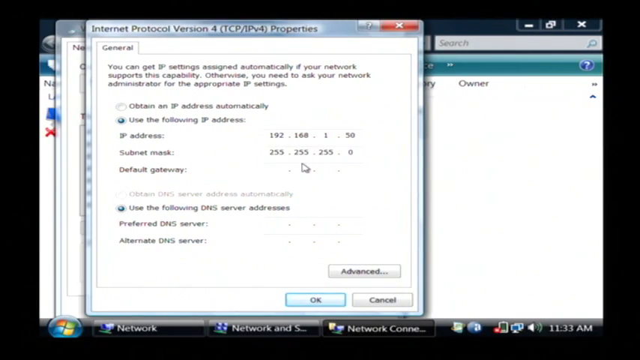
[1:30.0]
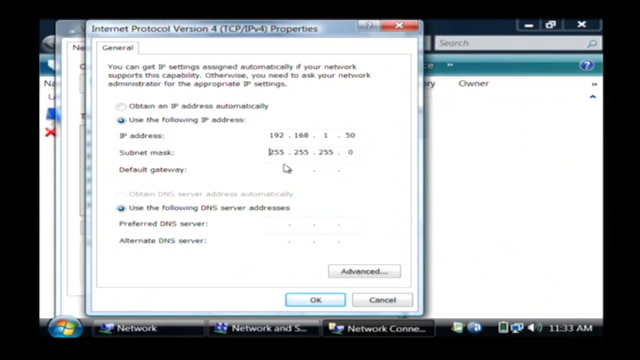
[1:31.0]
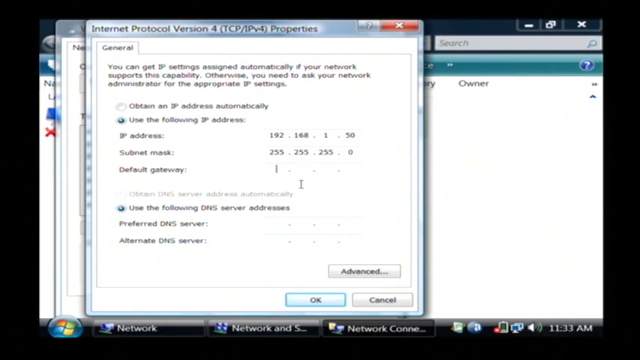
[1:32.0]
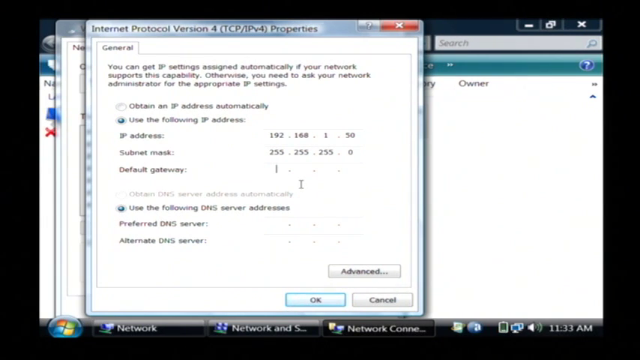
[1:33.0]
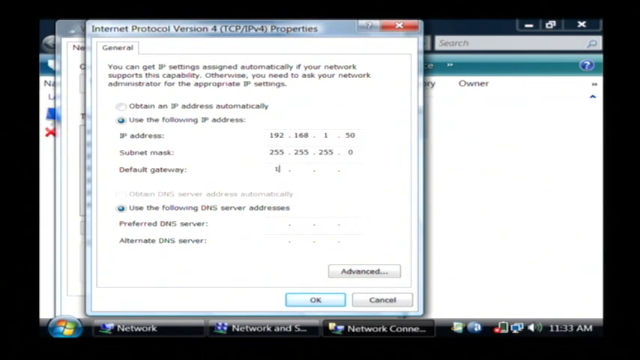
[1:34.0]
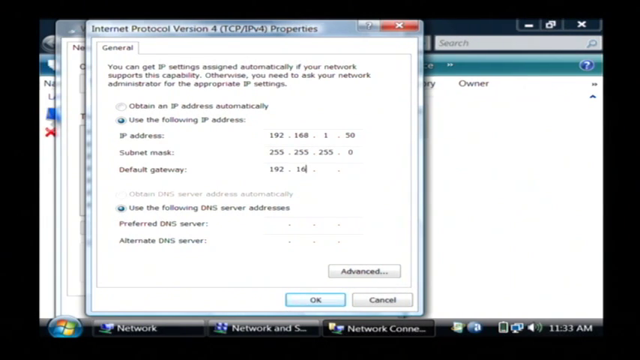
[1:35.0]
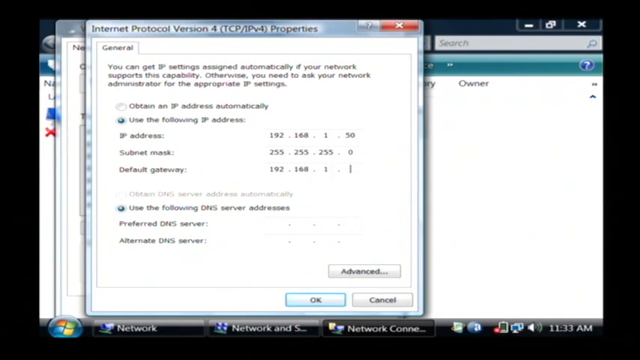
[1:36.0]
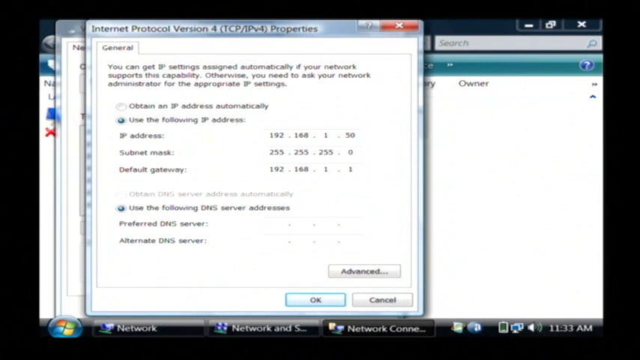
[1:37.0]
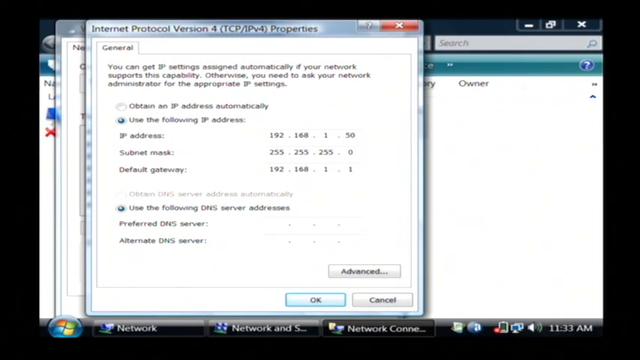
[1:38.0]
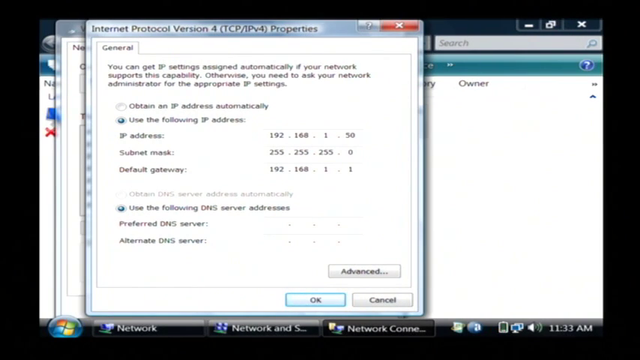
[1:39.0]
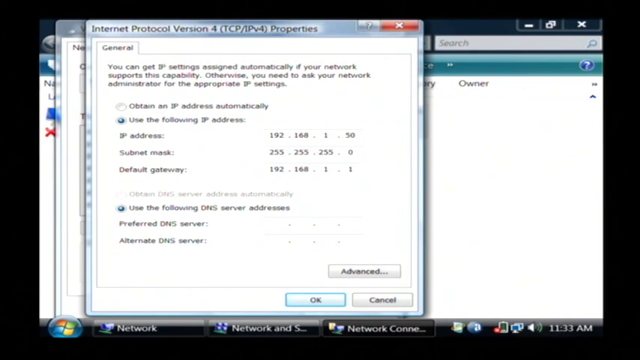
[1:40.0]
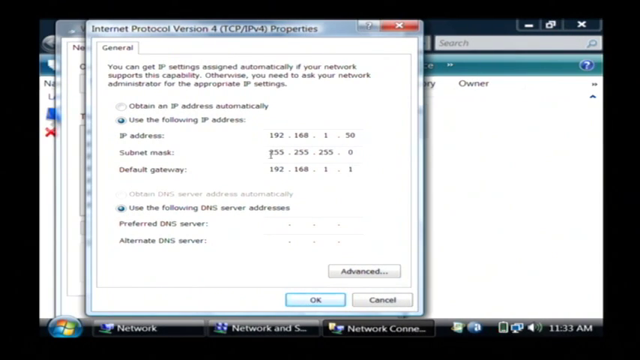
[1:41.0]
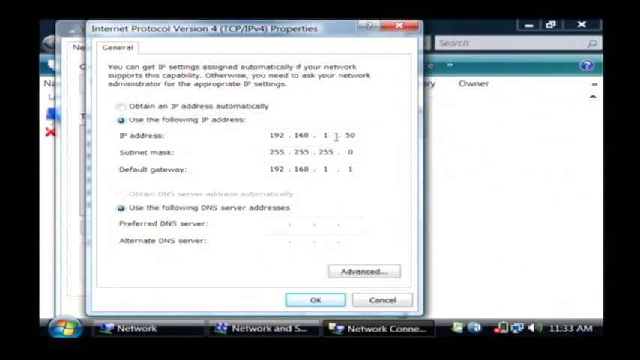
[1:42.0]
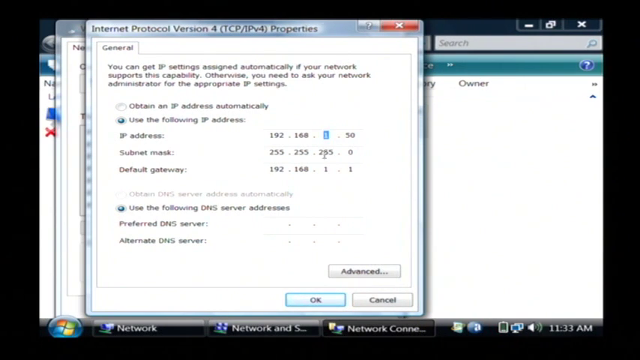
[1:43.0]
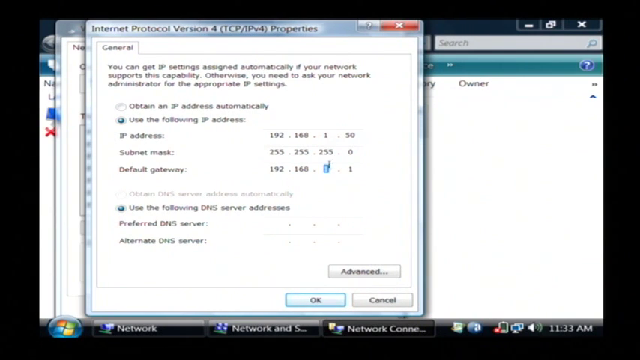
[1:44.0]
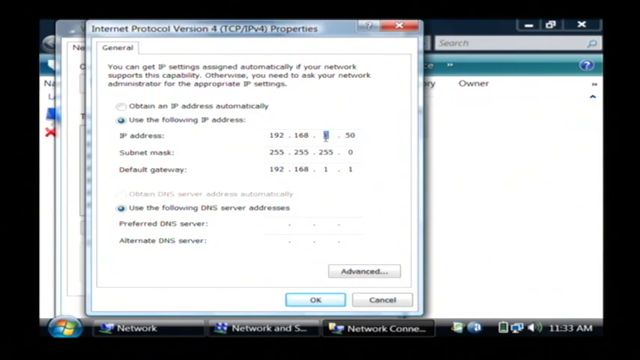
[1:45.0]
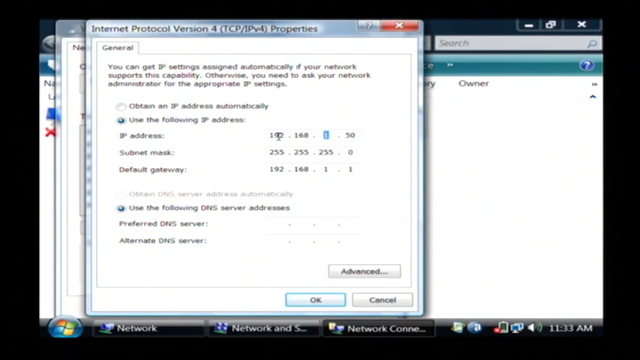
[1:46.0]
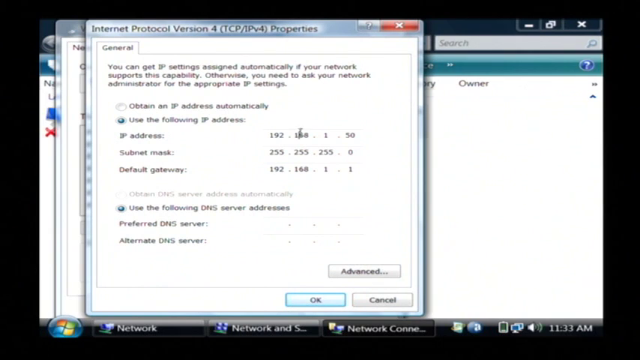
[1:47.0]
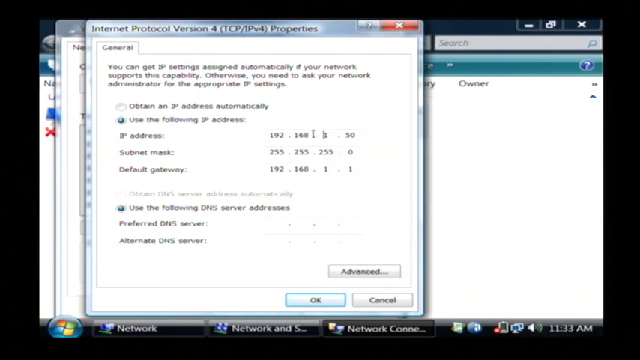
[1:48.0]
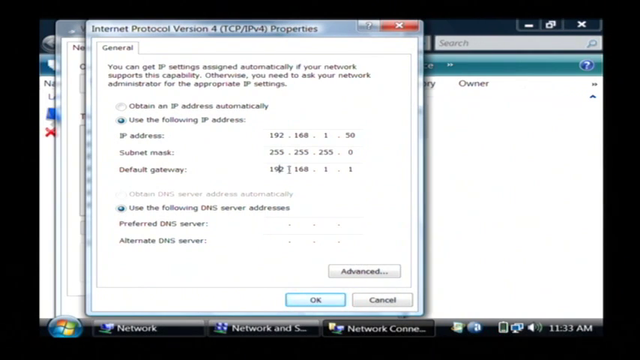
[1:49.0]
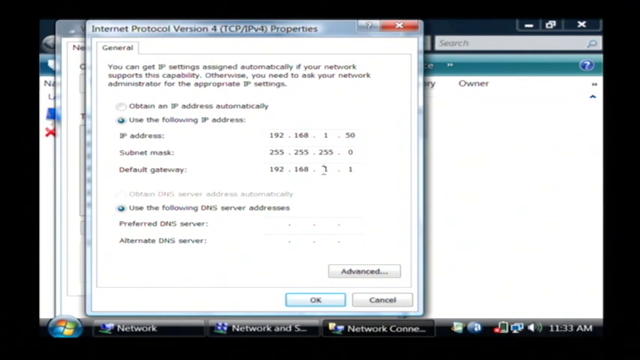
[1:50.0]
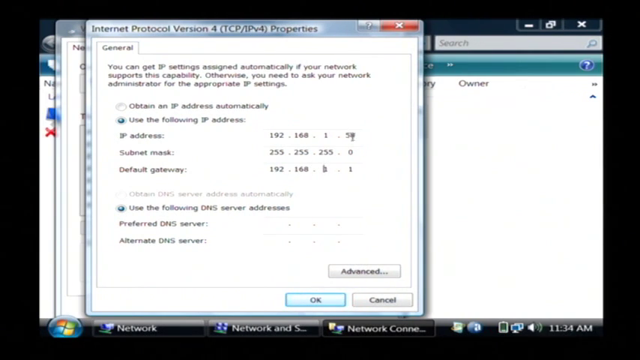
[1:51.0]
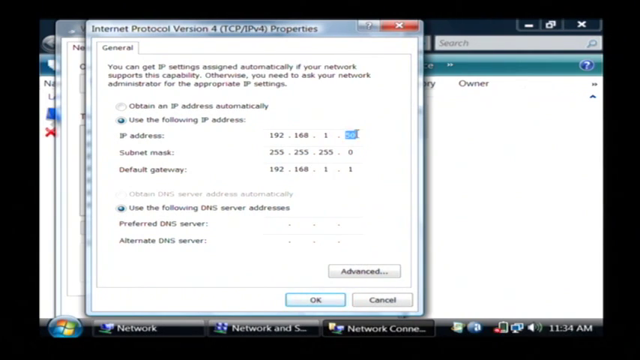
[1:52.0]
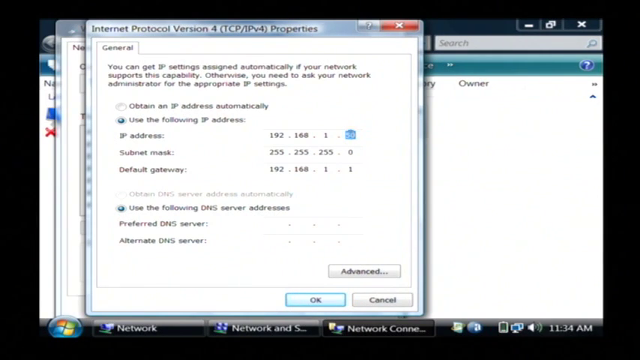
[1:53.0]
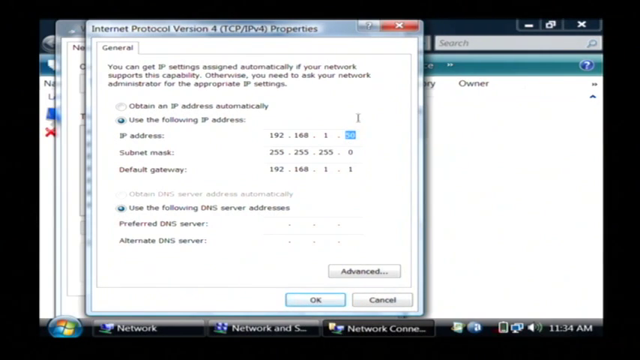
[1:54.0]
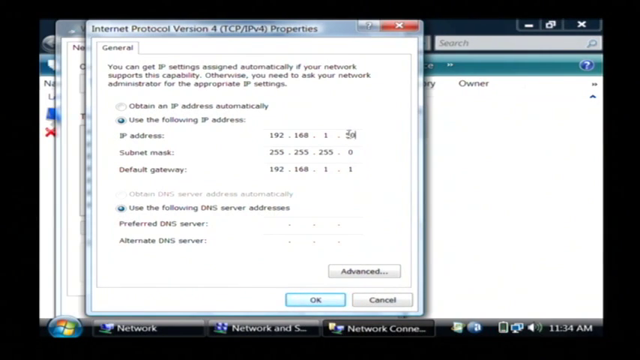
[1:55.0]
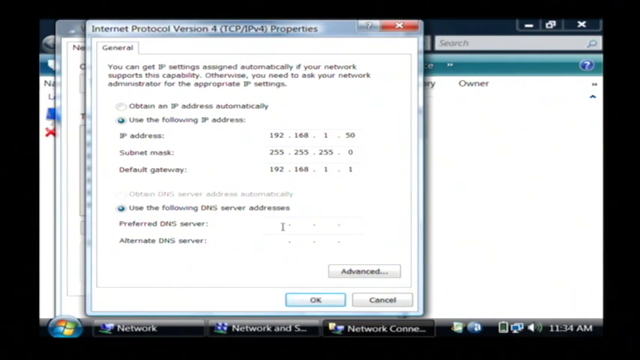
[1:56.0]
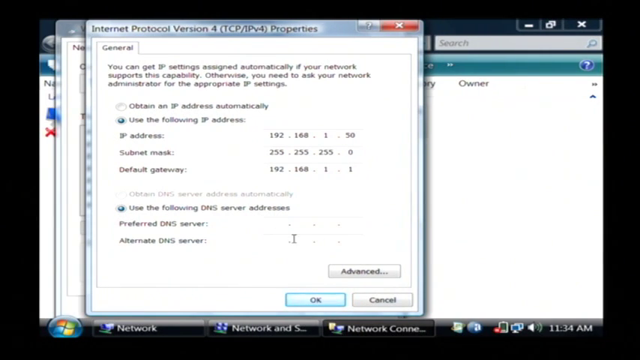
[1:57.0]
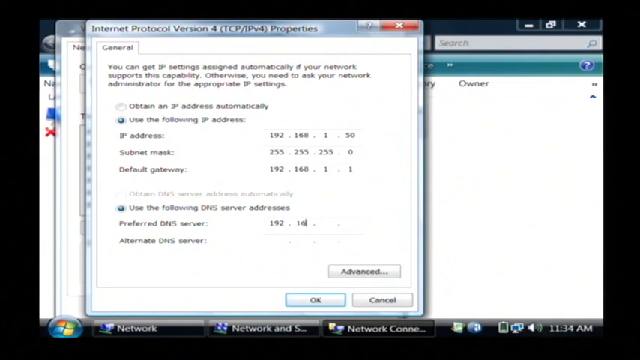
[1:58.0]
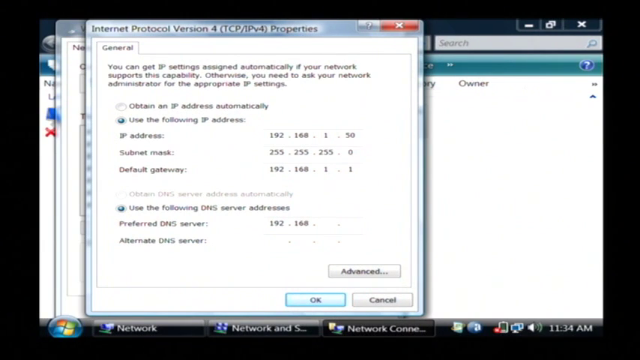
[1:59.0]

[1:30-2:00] A new window is open above two other windows of the program. Its silver top bar reads "Internet Protocol Version 4" followed by "Properties", and in the upper right-hand corner there is a question mark icon and a red X. The open folder reads "General" and contains the text "You can get IP settings assigned automatically if your network supports this capability. Otherwise, you need to ask your network administrator for the appropriate IP settings." Below that it reads "Obtain an IP Address Automatically", then "Use the Following IP Address", then "IP Address" with "192.168.1.50" next to it. Below that it reads "Subnet mask" with "255.255.255.0" next to it, and below that "default gateway". The mouse hovers underneath the subnet mask numbers. Lower on the screen it reads "obtain DNS server address automatically" and "use the following DNS server addresses", with no numbers, then "preferred DNS server" and "Alternate DNS server", both with no numbers. Below and to the right is a button that says "advanced", and below that, justified to the right, buttons that say "okay" and "cancel". The mouse moves to default gateway and 192.168.1.1 is typed in. The mouse circles, changes and highlights numbers as if narrating and highlighting along the way.